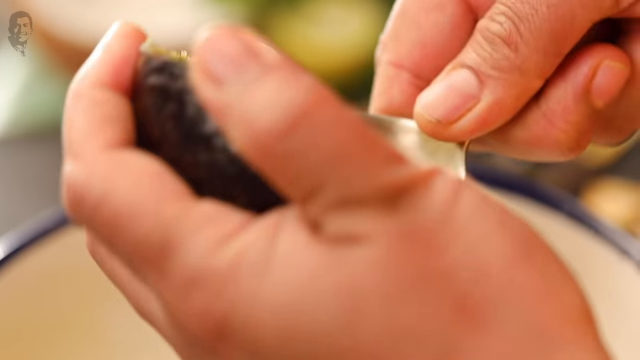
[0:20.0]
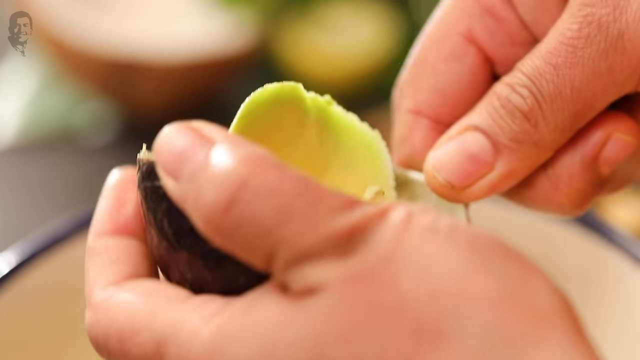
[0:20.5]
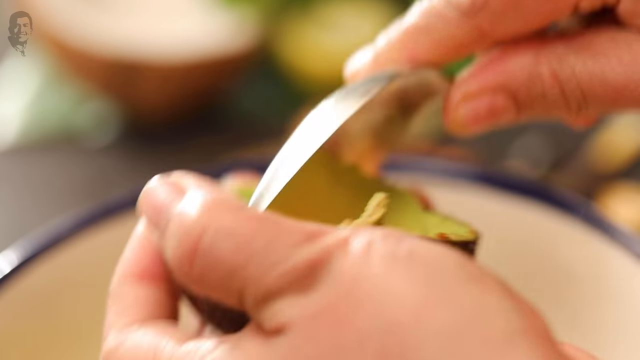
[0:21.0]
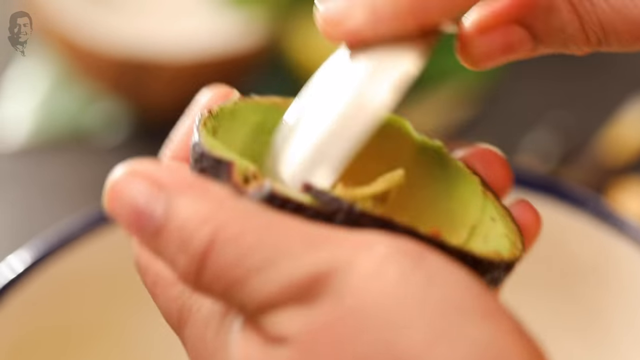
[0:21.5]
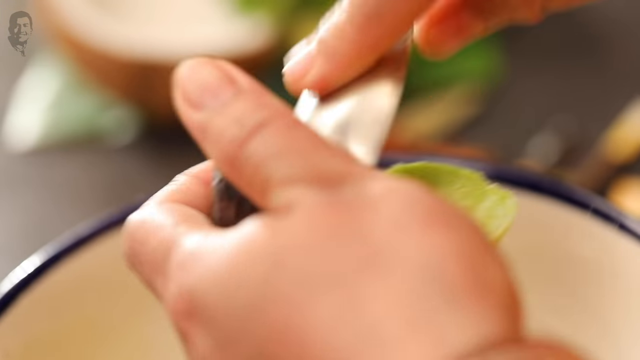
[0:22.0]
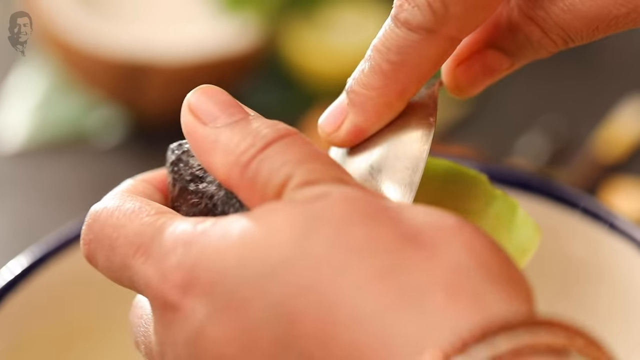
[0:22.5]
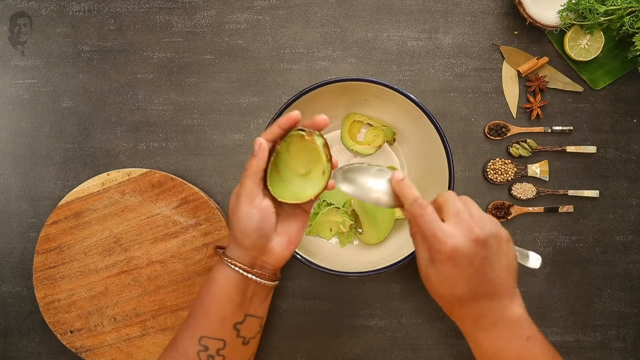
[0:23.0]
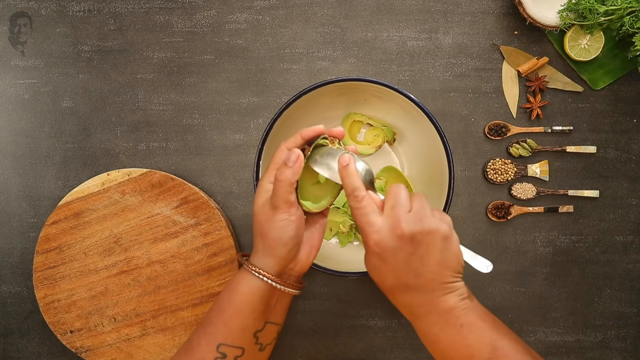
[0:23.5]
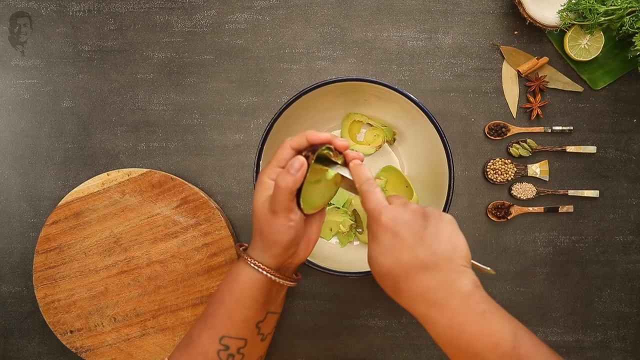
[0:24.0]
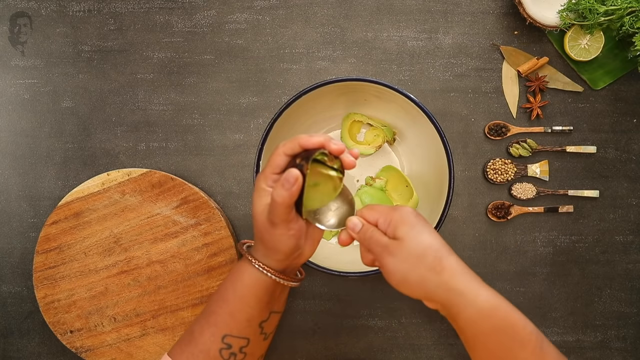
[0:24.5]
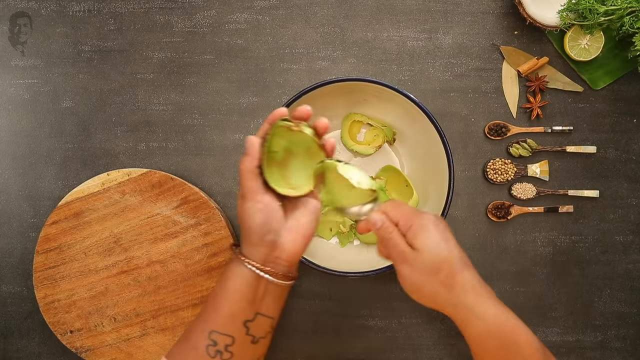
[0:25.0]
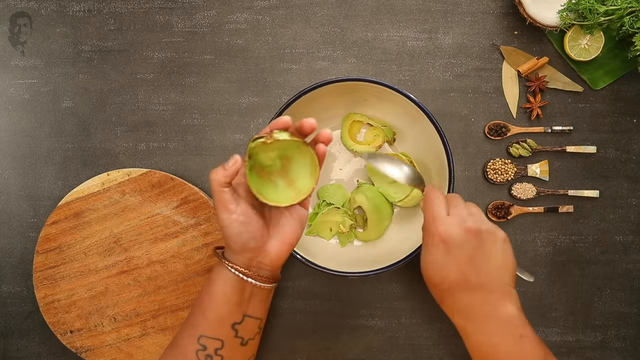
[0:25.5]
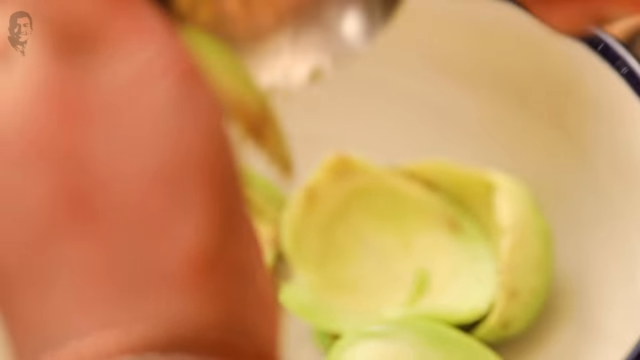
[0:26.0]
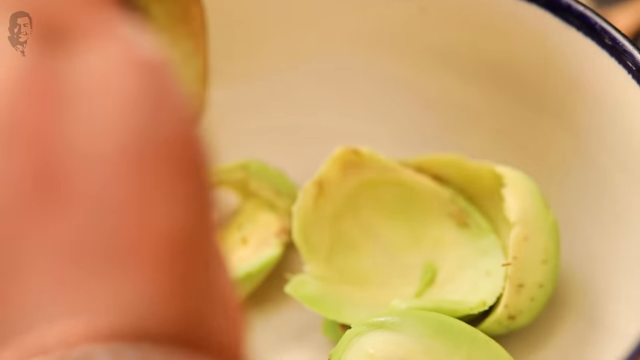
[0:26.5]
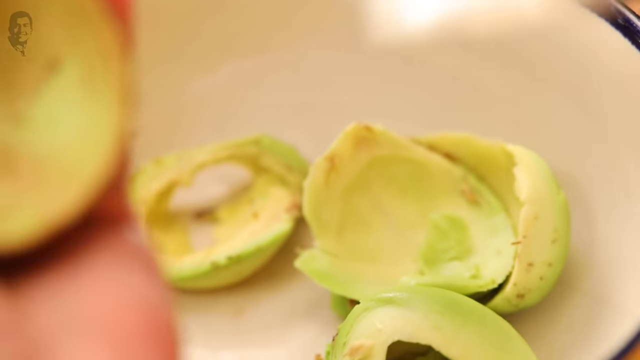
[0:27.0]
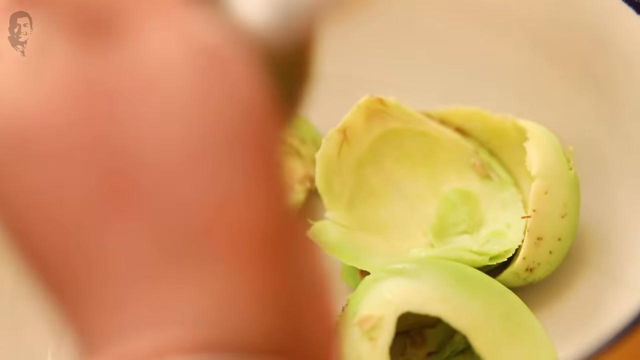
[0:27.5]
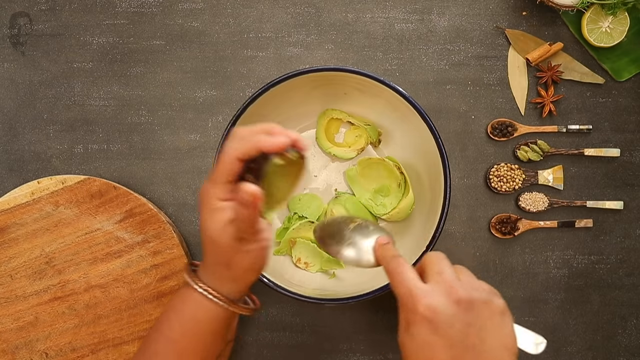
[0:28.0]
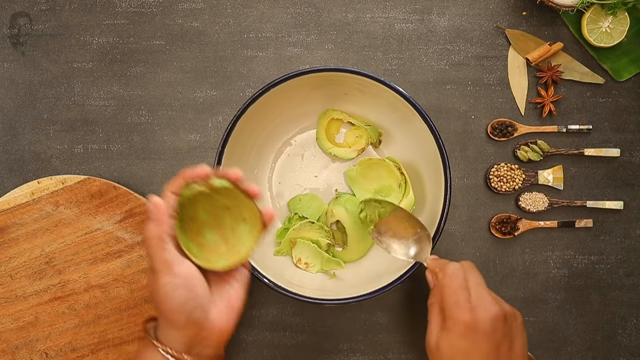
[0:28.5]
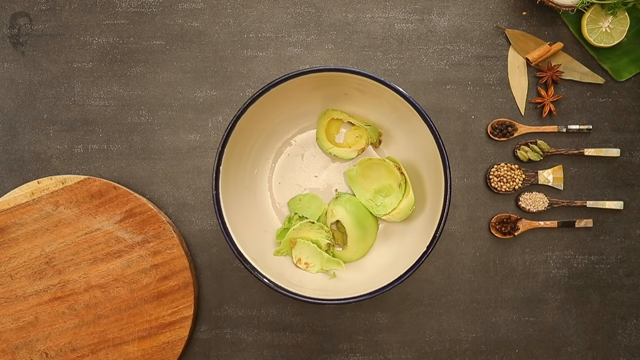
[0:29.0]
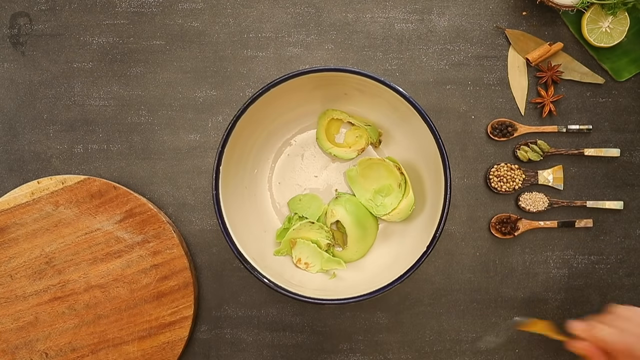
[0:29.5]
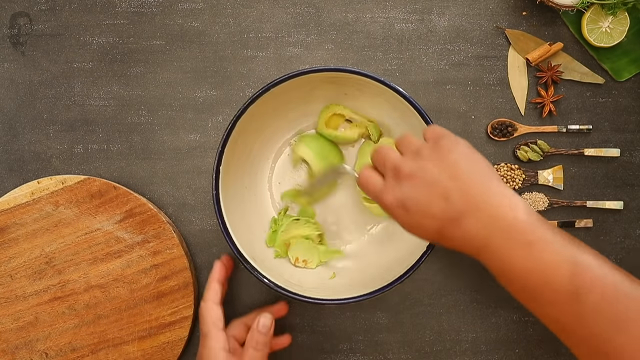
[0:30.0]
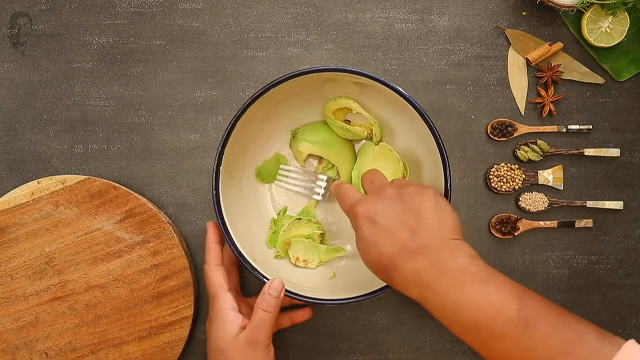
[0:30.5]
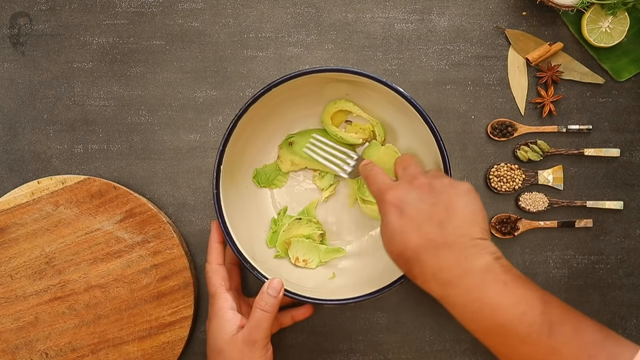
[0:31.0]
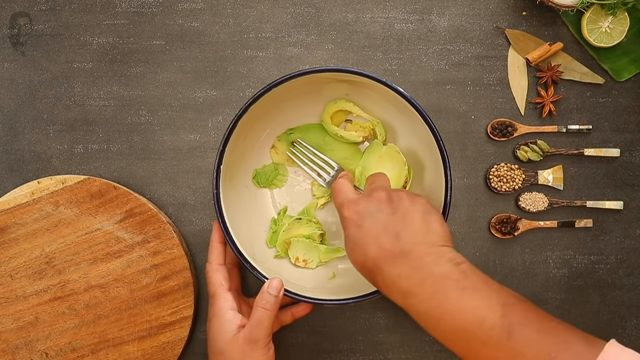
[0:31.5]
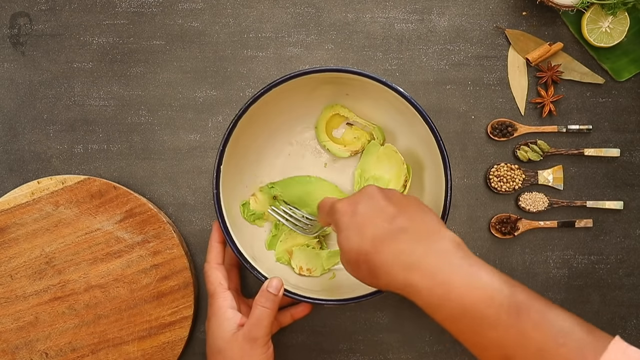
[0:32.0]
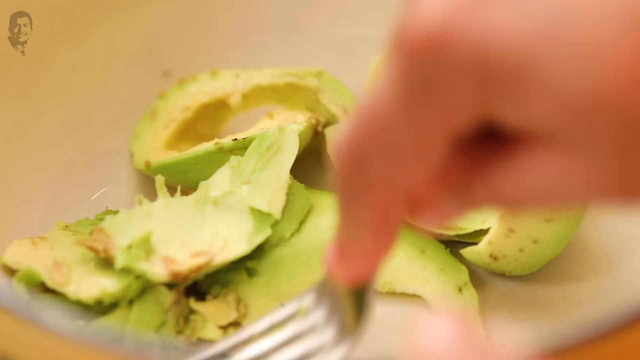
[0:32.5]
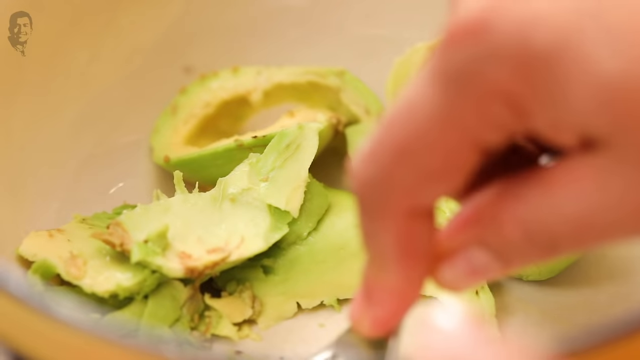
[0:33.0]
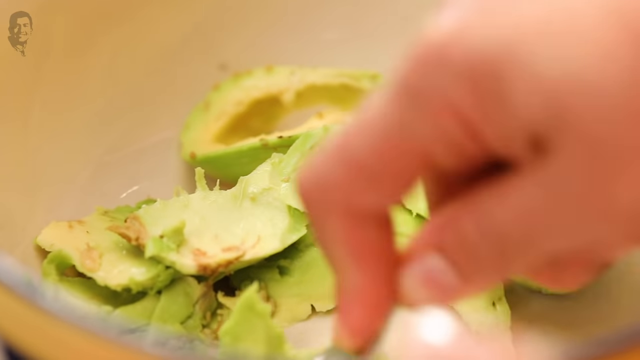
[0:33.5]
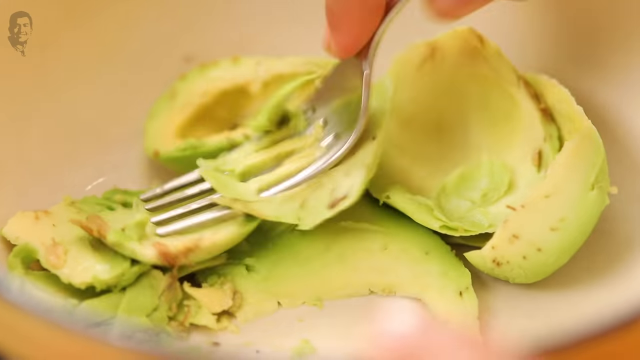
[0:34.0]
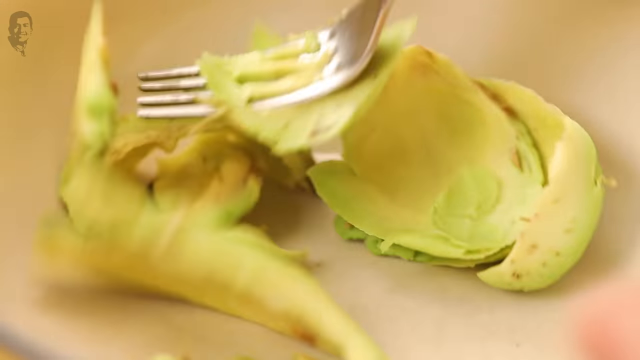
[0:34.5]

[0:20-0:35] The woman has two avocado halves and uses a round spoon to scoop the avocado out of its skin into the white bowl, which has a blue ring around the top. She has a tattoo and a gold bangle. She then takes a fork and squashes the avocado down into a mash. On the right-hand side are the small measuring spoons, each holding herbs or other ingredients. The wood cutting board is still on the counter. Among the ingredients there is also a lime and some leaves, maybe bay leaves.